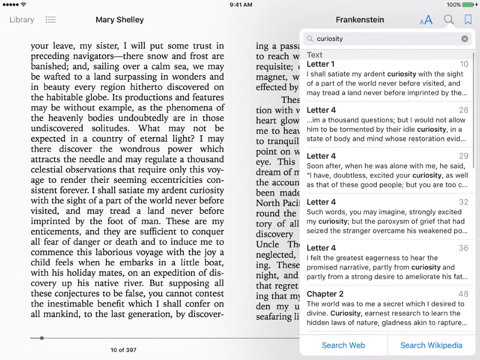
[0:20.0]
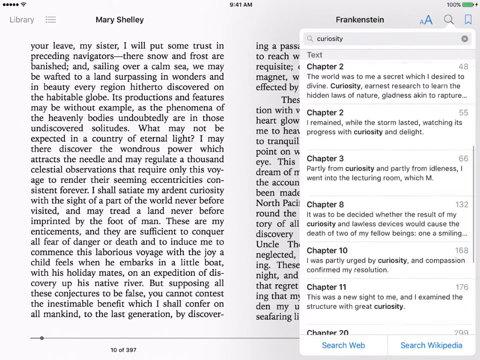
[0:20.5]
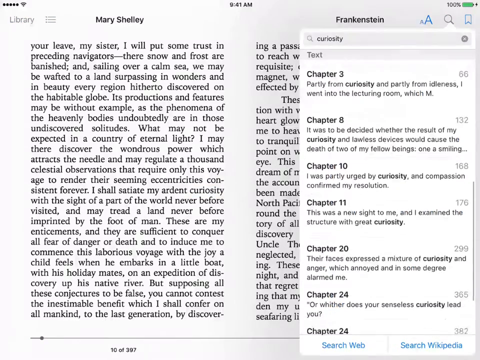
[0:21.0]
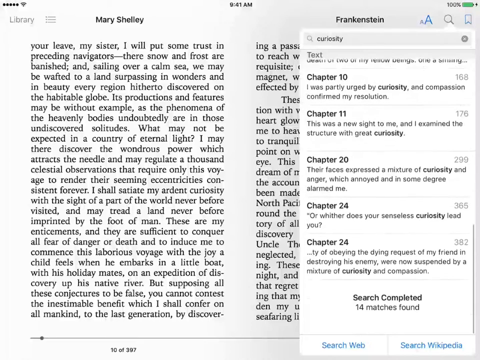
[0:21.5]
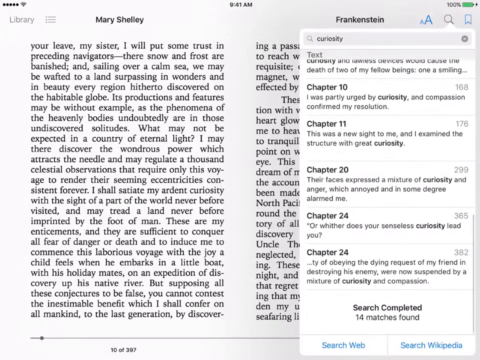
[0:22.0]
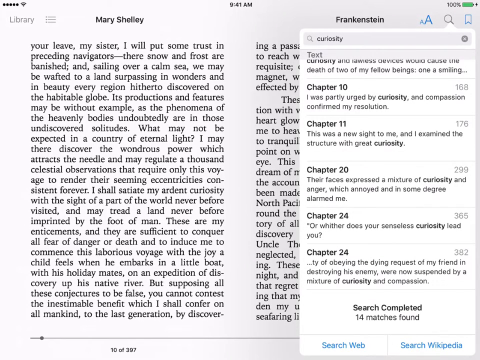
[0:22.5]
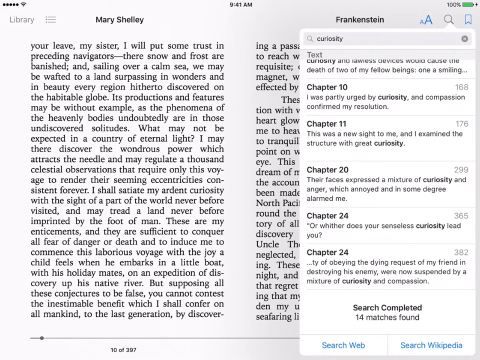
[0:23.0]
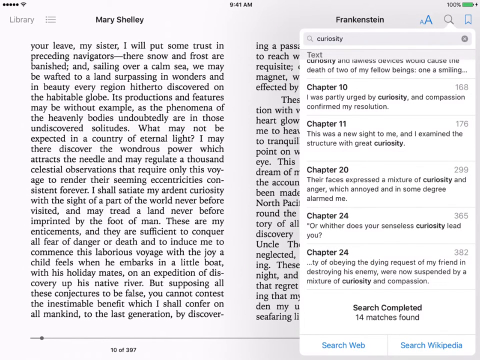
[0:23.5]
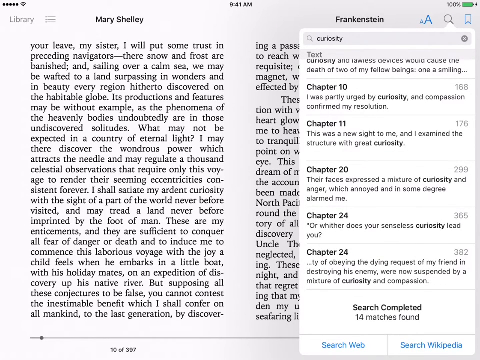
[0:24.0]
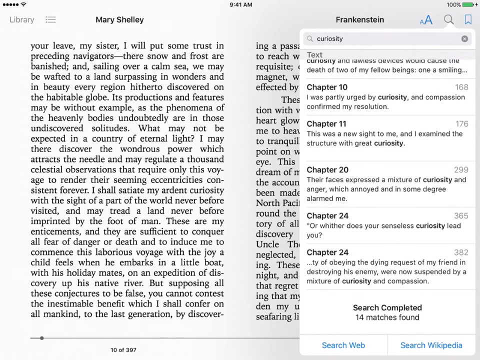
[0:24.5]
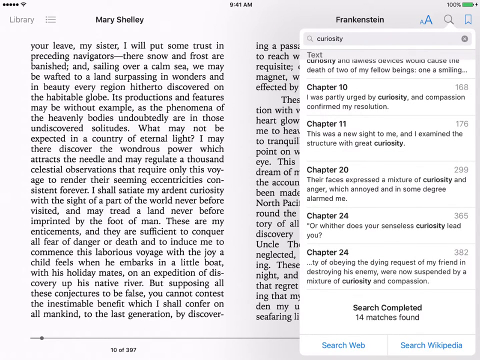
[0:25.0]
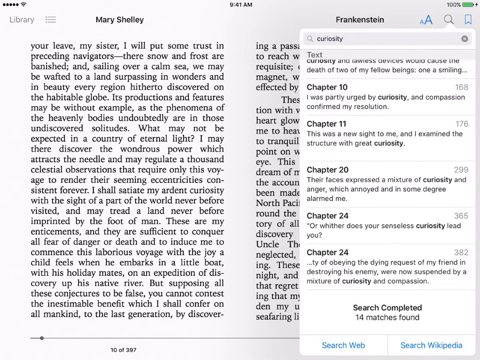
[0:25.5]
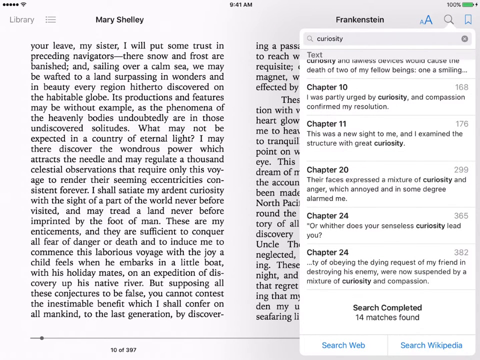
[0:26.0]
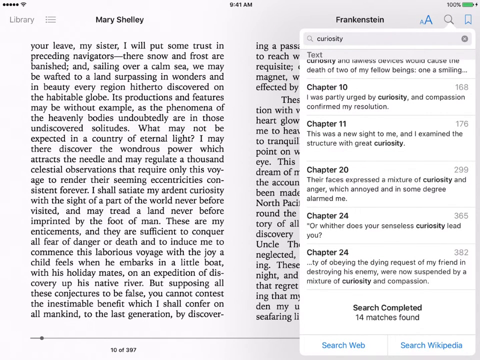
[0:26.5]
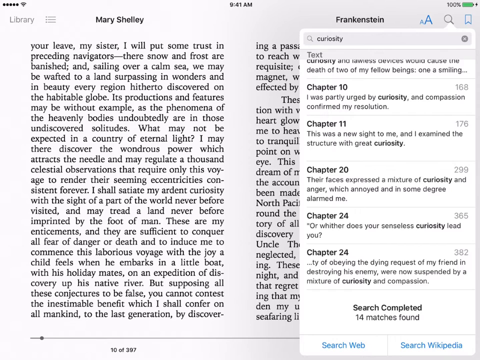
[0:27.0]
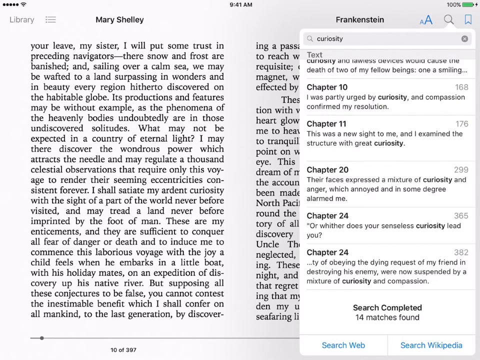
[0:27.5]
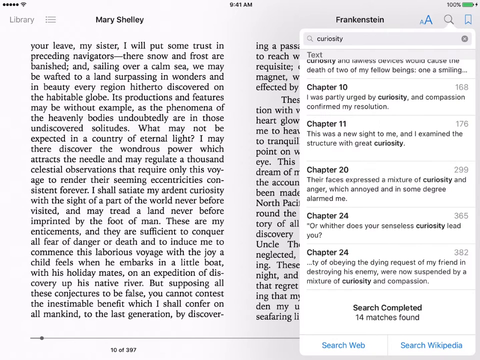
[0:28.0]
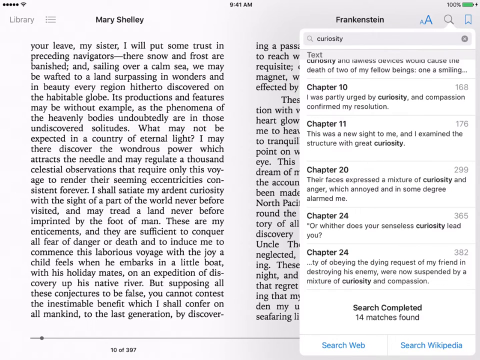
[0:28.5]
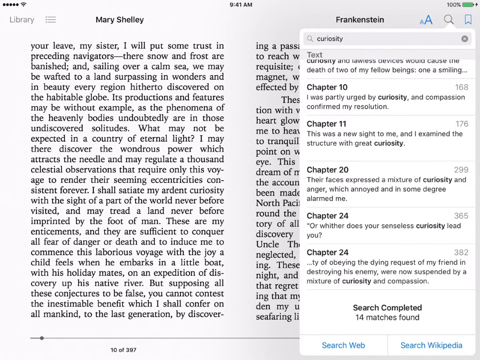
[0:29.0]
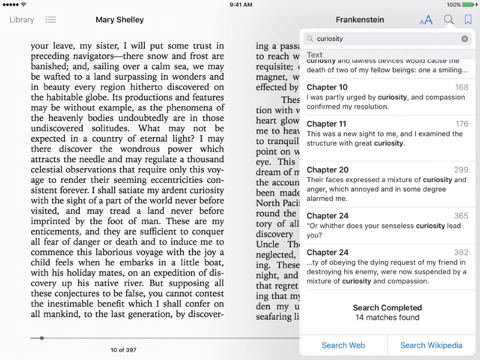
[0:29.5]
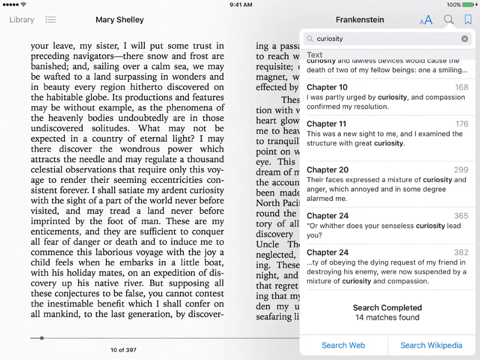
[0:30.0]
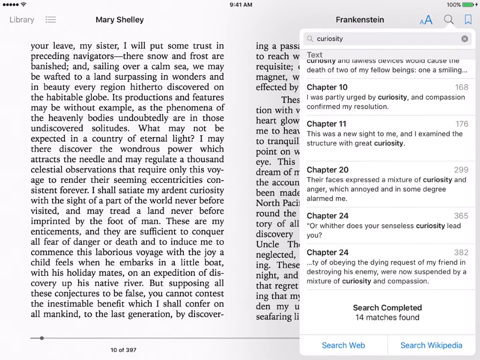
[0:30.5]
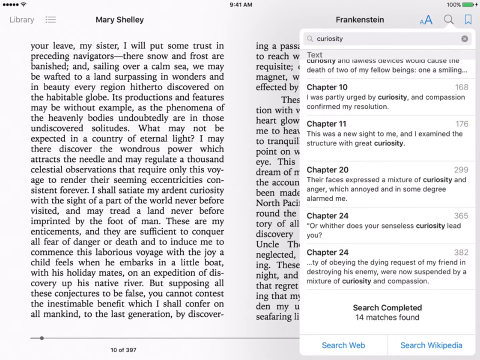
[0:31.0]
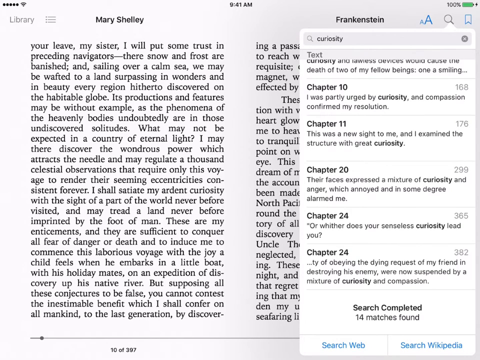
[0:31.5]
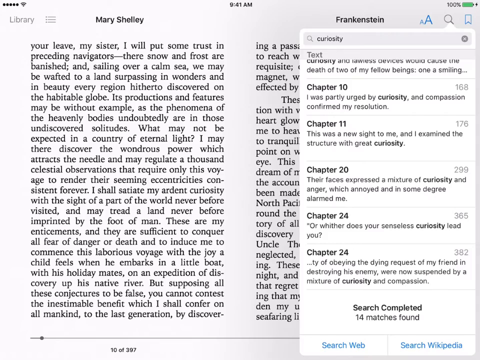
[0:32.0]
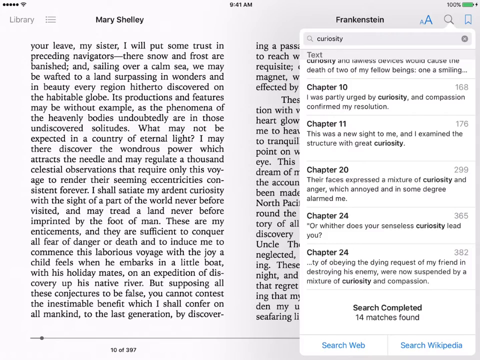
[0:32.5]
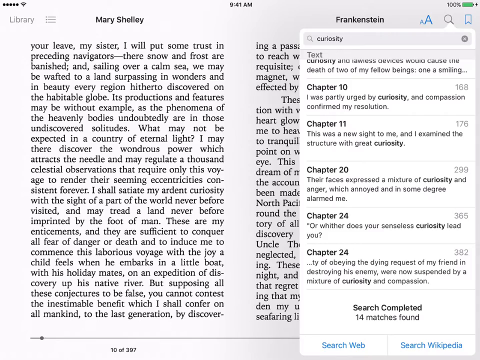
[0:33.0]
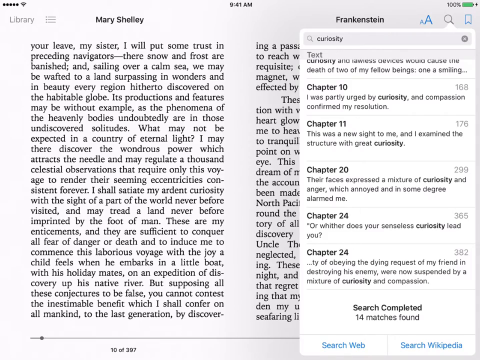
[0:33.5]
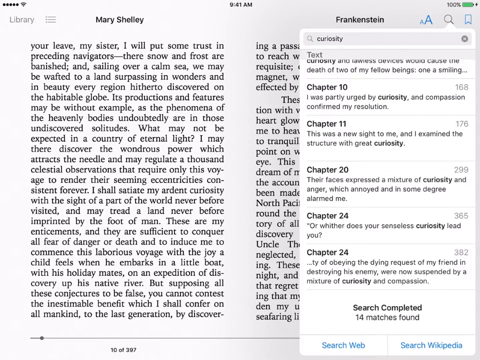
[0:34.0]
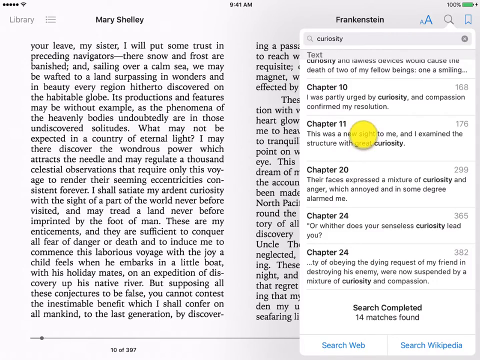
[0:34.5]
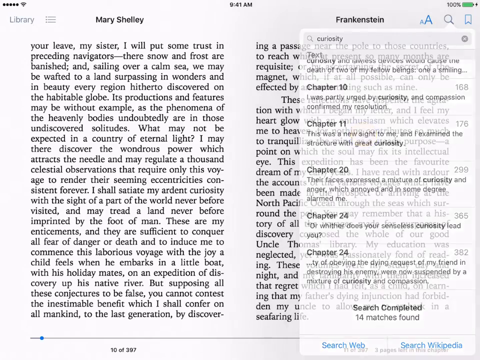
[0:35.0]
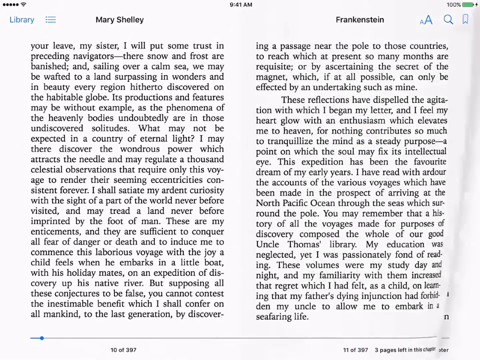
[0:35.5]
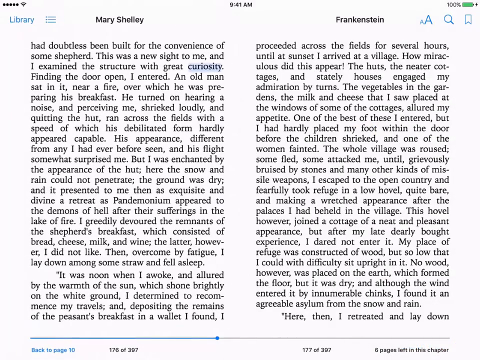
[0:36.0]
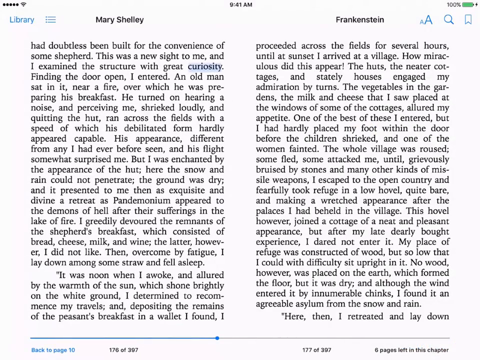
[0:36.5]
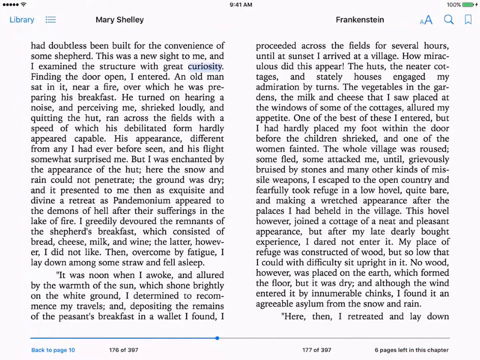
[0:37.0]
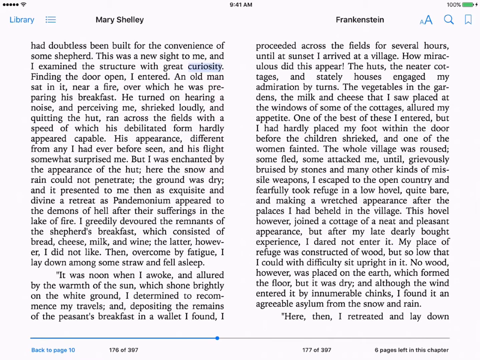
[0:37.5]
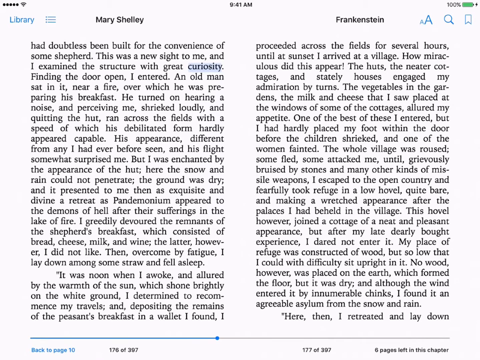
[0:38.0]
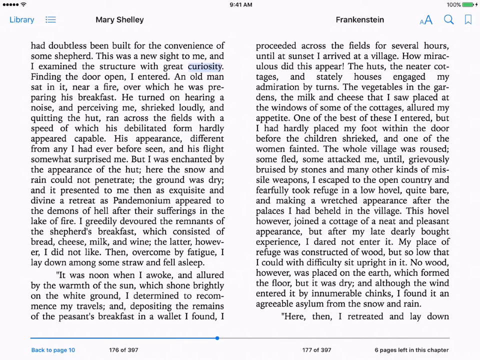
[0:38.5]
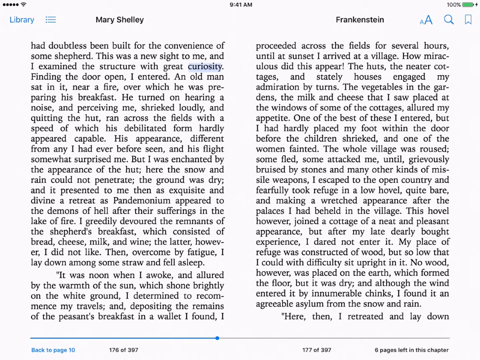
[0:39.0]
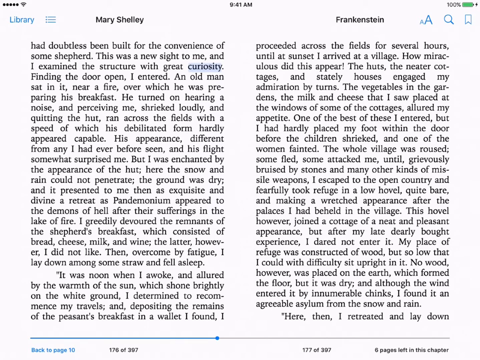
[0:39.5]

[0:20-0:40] The book remains on the screen. "Library" is visible, now in gray, along with the author, Mary Shelley, and the title, Frankenstein. The device's battery is at 100 percent, the time is still 9:41 a.m., and the editing letter A and the search icon are still there. The person clicks on the search section and types "curiosity." A list of results appears showing where the word can be found. One is in Letter 1 on page 10: "I shall associate my ardent curiosity with the sight of a part of the world never before visited." Many results come from Letter 4, on pages 28, 29, 32 and 36, and one from Letter 2. The Letter 4 result reads "a thousand questions, but I would not allow him to be tormented by their idle curiosity." The page 29 result reads "Soon after, when he was alone with me, he said, I have doubtless excited your curiosity as well as that of these people." The page 32 result reads "Such words, you may imagine, strongly excited my curiosity, but the paroxysm of grief that had seized the stranger overcame his." The results continue on and on down to Chapter 24, page 382, and the person flips through them.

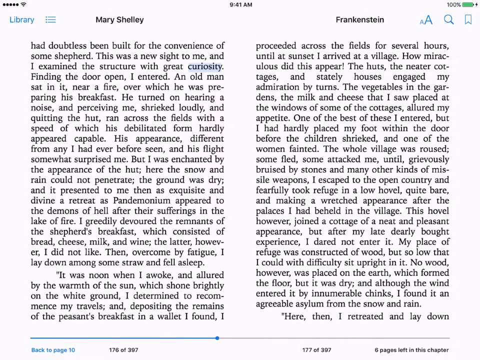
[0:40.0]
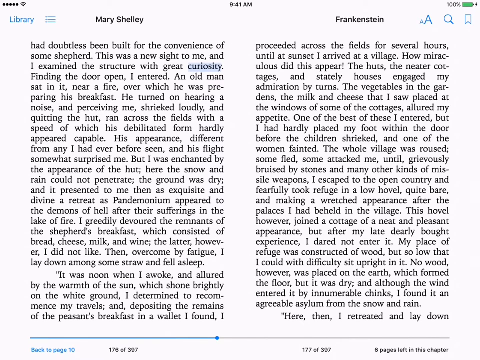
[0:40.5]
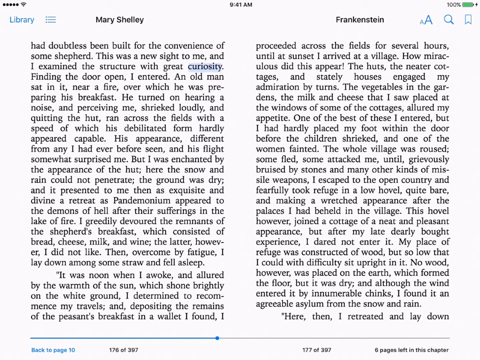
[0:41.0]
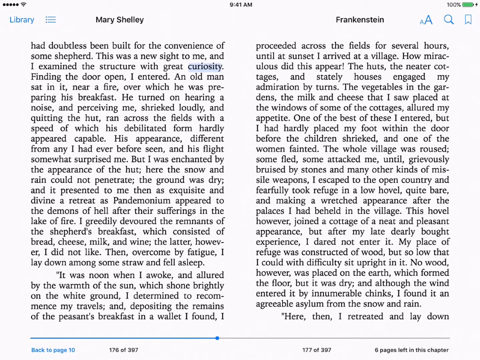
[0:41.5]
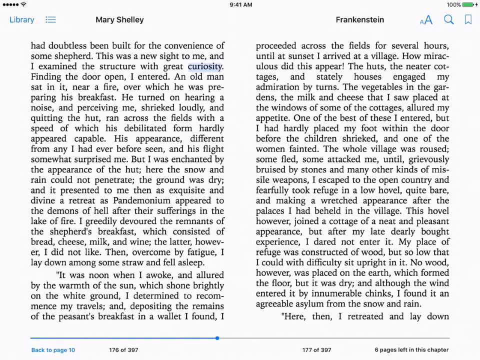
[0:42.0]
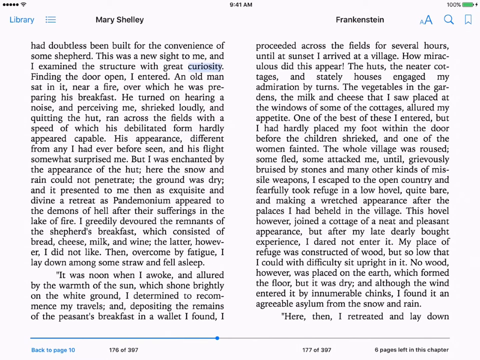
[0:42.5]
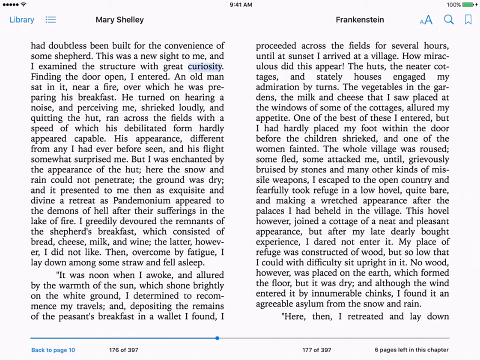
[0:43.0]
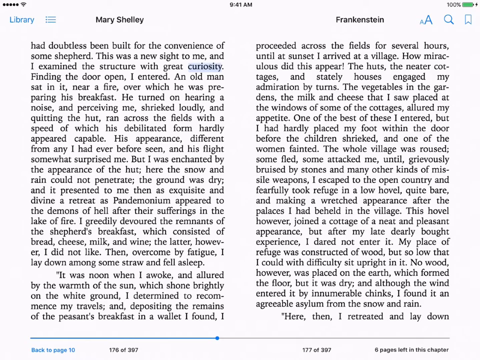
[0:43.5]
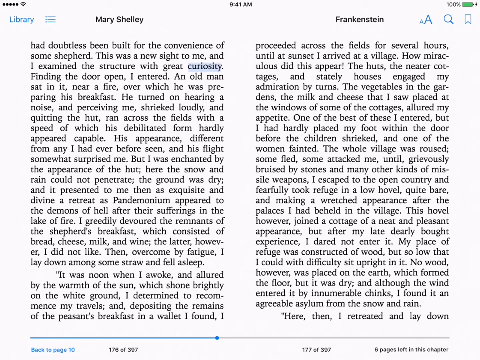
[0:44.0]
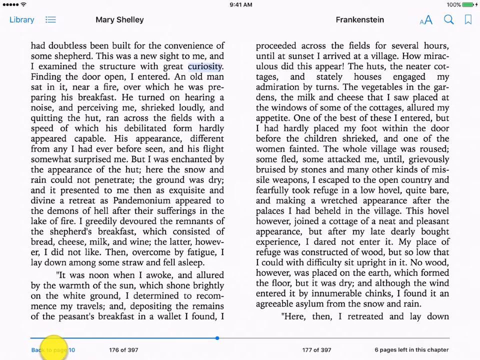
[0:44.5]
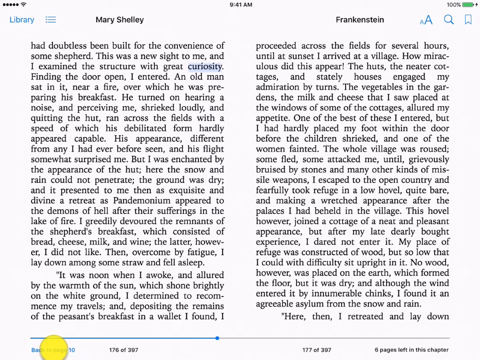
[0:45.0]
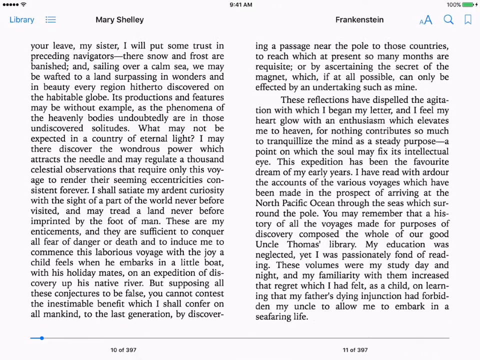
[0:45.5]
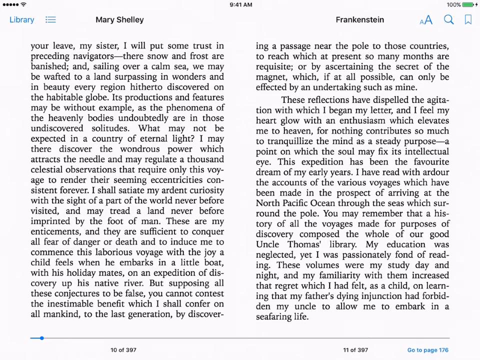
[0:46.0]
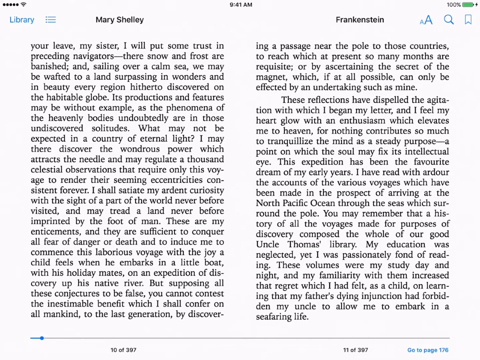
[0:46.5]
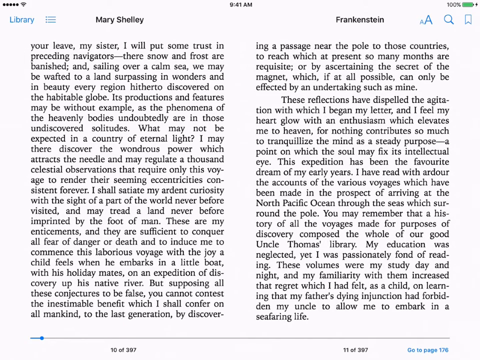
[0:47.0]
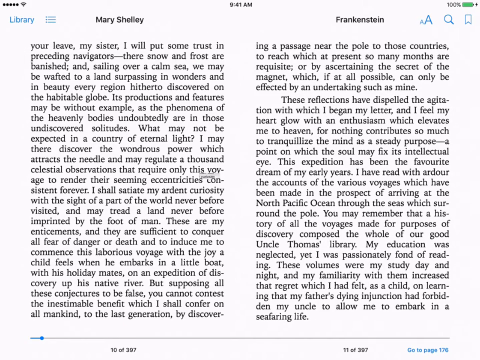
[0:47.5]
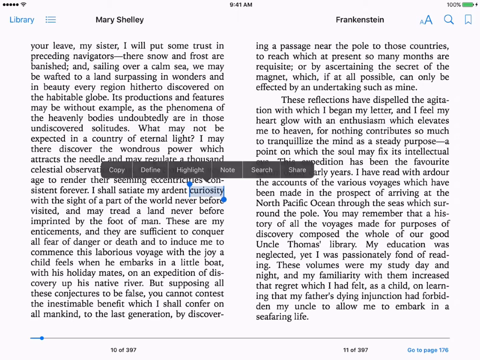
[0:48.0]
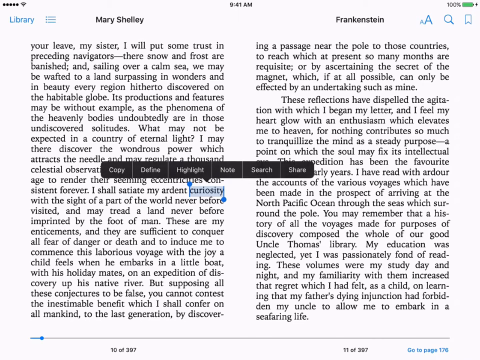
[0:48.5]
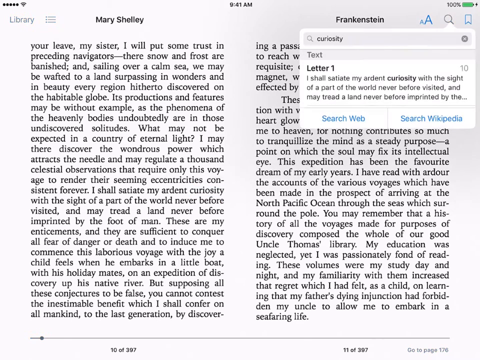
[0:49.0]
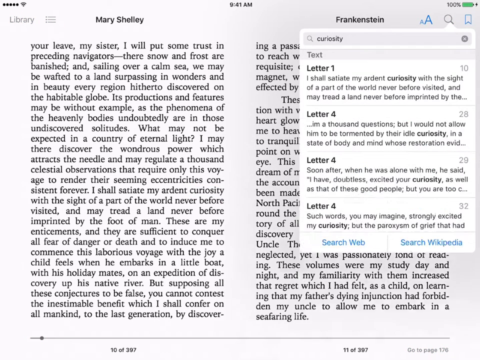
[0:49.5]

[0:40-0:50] The person moves on to the next pages. On one page, the word "curiosity" is highlighted, then right-clicked, then search is clicked, and the search runs. Only one paragraph on the opened page is readable: "It was noon when I woke up and allured by the warmth of the sun, which shone brightly on the white cloud, I determined to recommence my travels and depositing the remains of the peasants breakfast in a wallet I found." The person moves on to the next page, and the search results for "curiosity" open, listing Letter 1, several Letter 4 entries and Letter 2, going down to the last result where the word can be found.